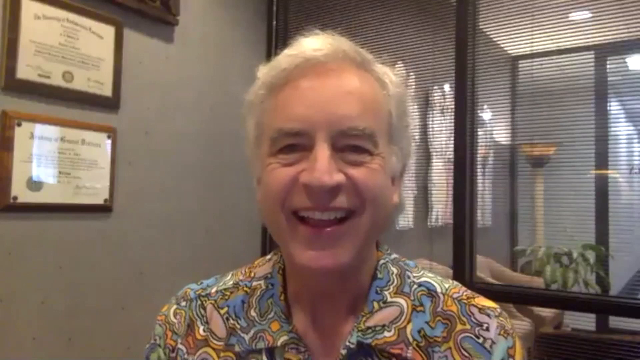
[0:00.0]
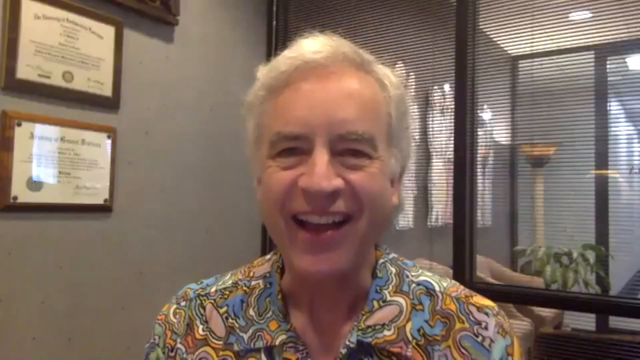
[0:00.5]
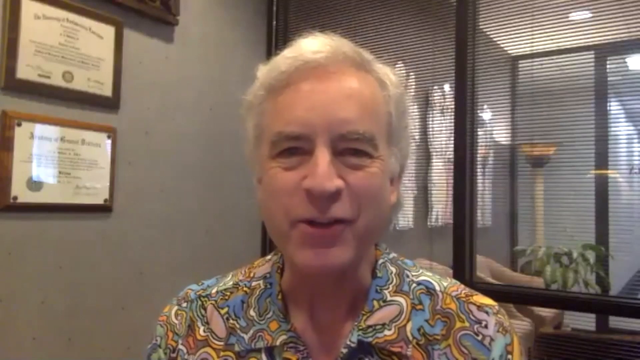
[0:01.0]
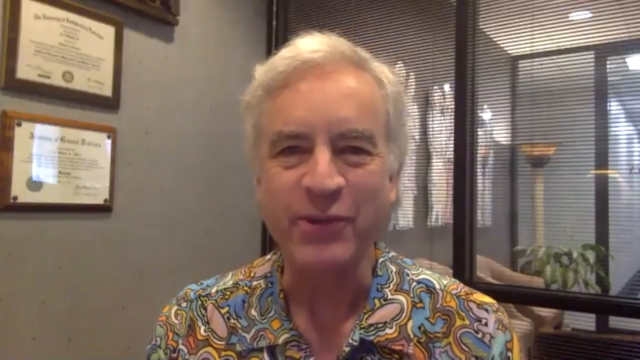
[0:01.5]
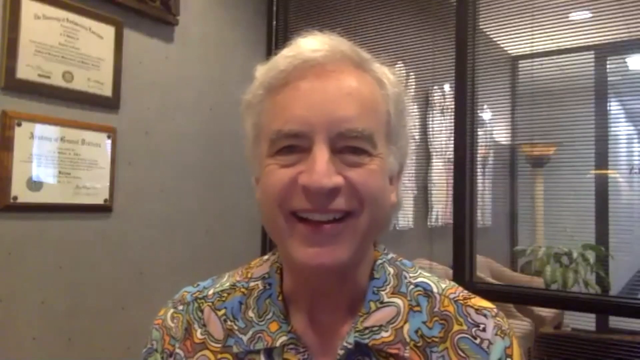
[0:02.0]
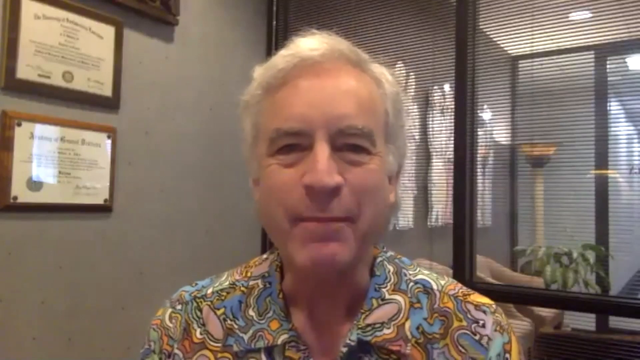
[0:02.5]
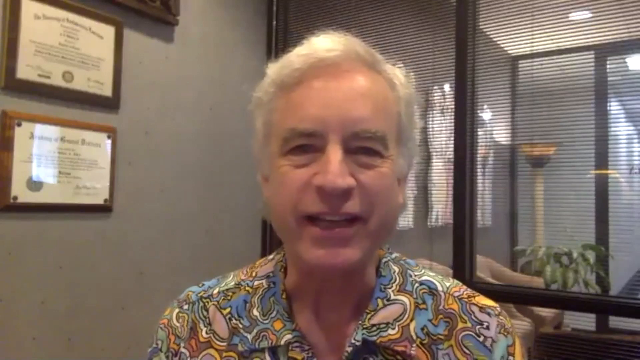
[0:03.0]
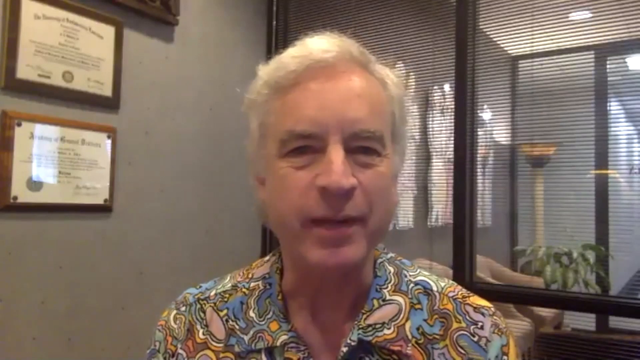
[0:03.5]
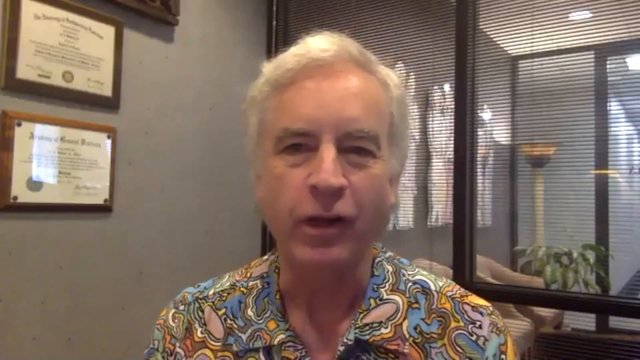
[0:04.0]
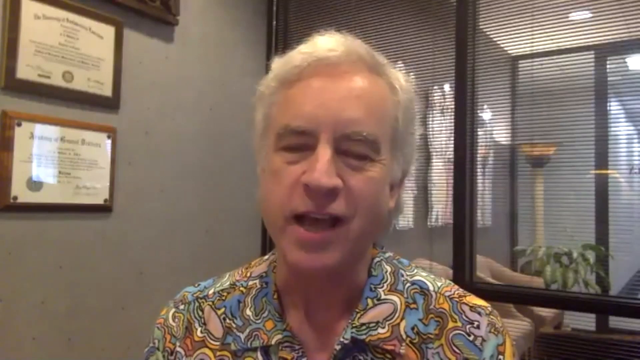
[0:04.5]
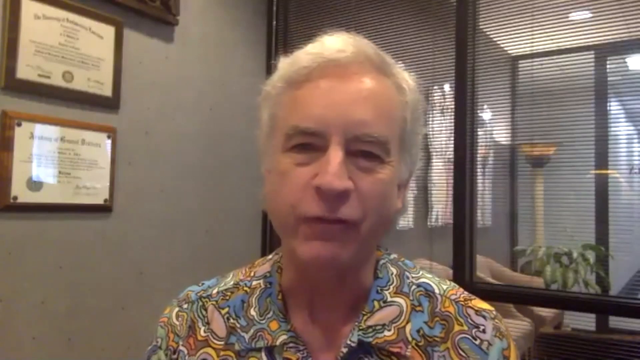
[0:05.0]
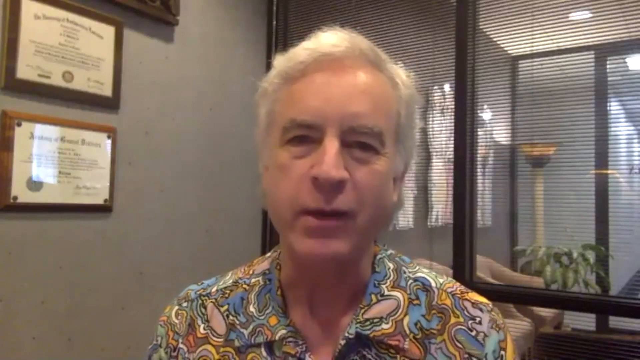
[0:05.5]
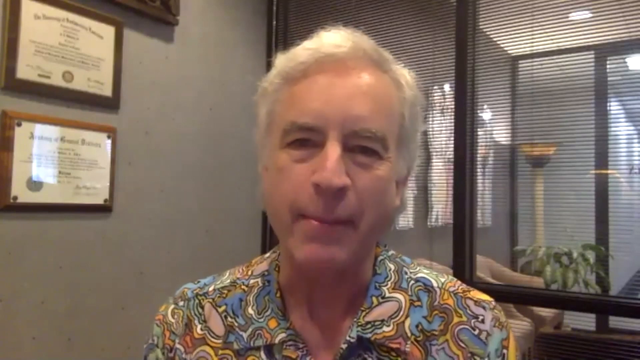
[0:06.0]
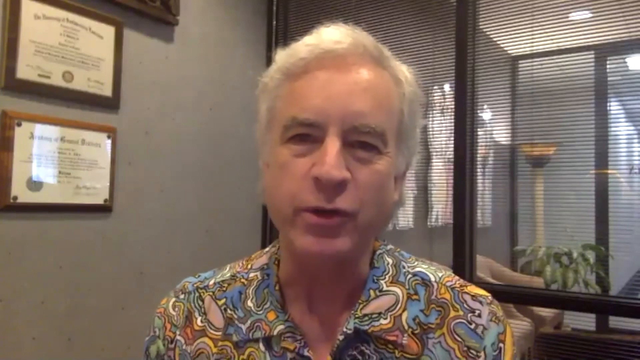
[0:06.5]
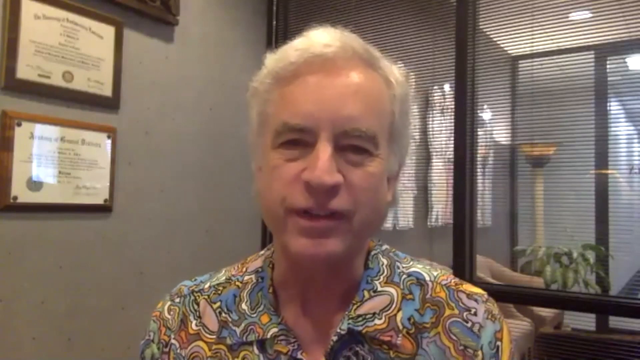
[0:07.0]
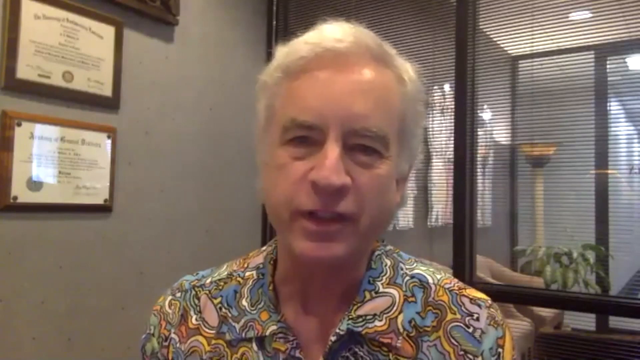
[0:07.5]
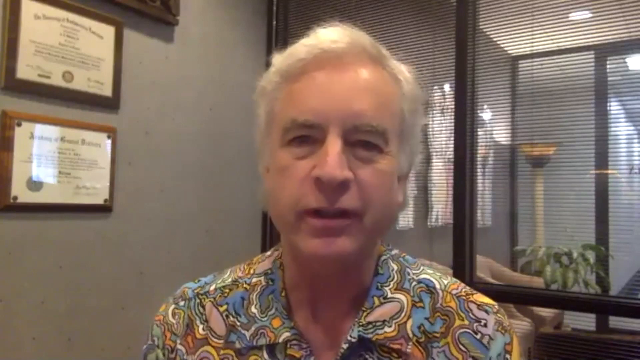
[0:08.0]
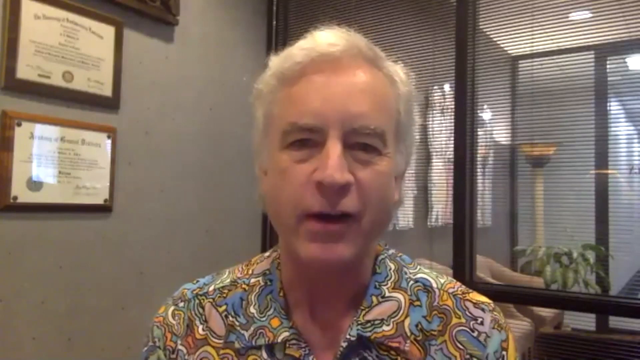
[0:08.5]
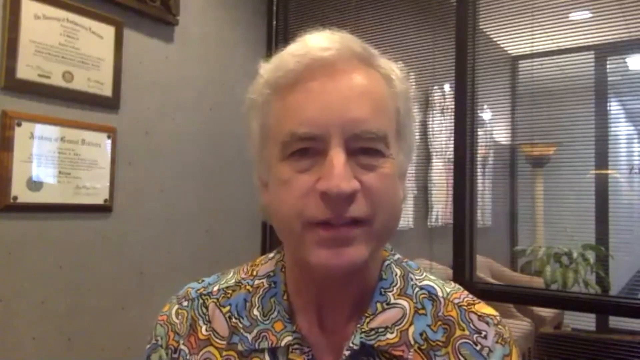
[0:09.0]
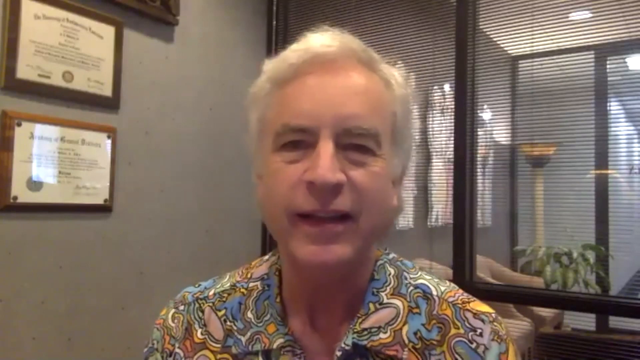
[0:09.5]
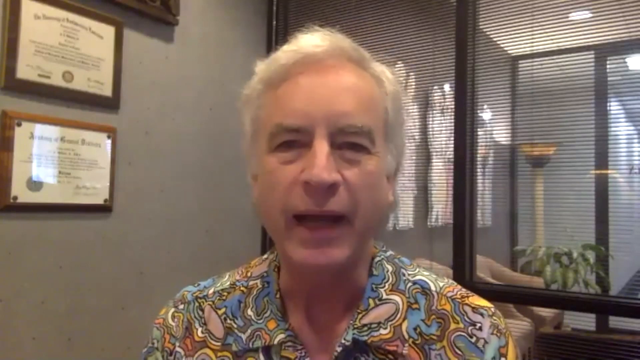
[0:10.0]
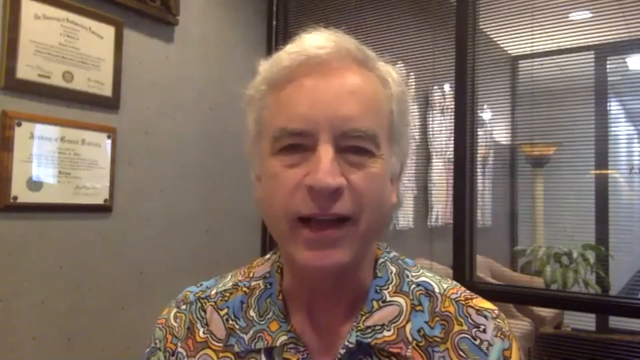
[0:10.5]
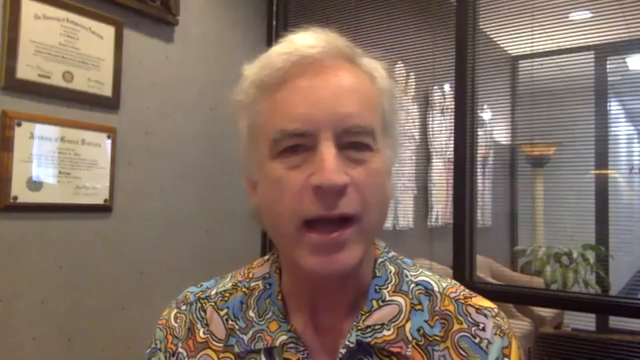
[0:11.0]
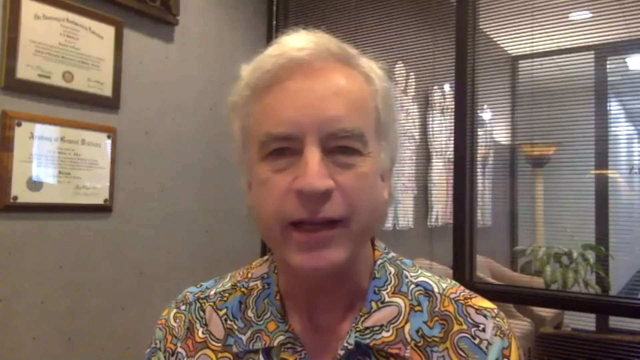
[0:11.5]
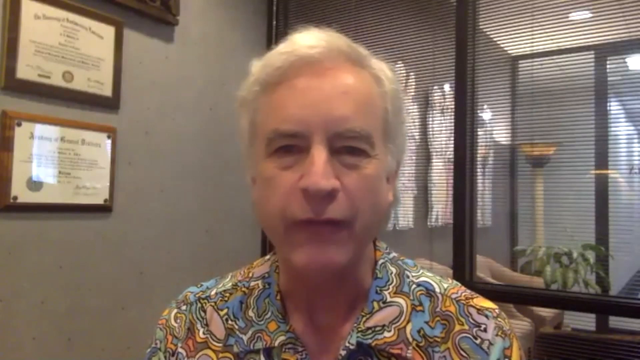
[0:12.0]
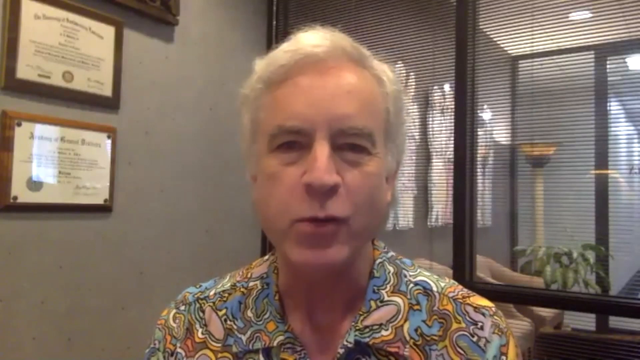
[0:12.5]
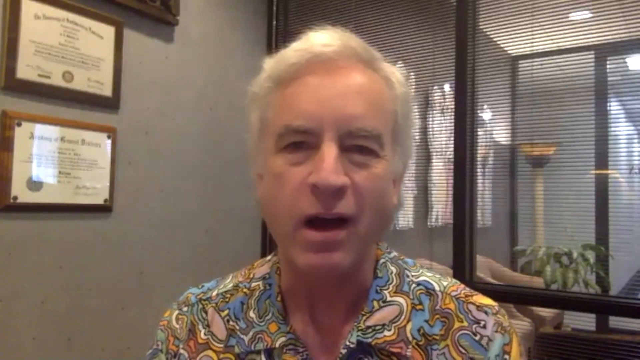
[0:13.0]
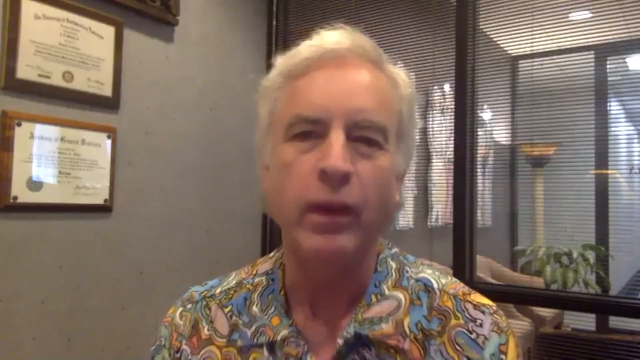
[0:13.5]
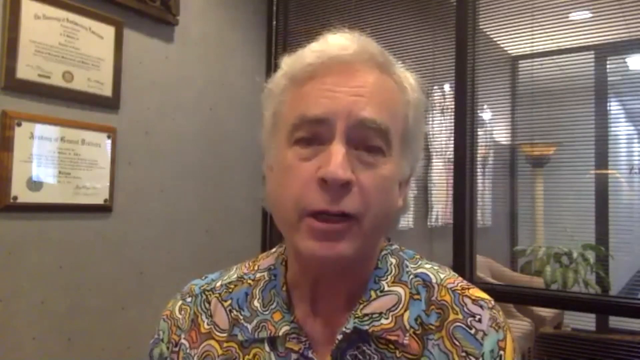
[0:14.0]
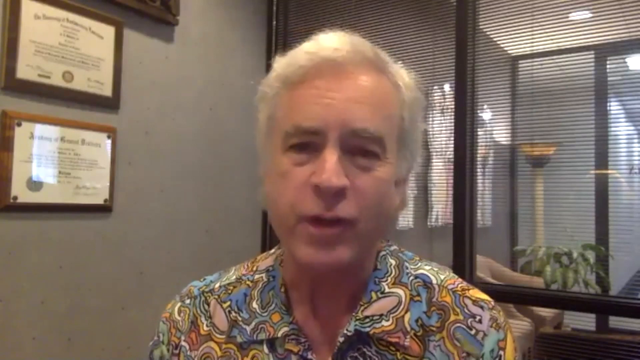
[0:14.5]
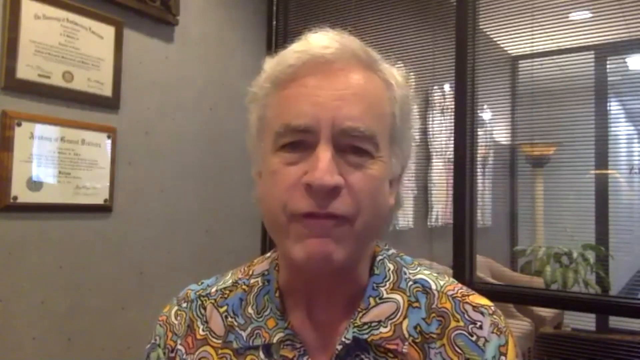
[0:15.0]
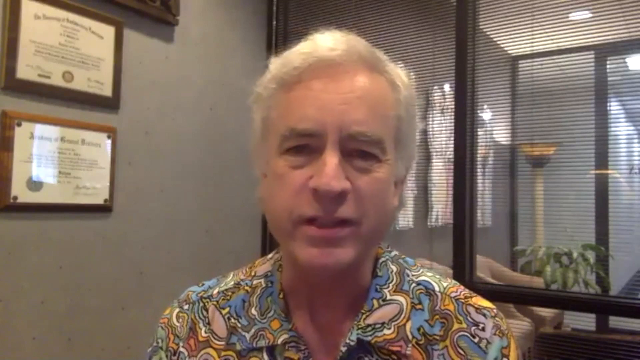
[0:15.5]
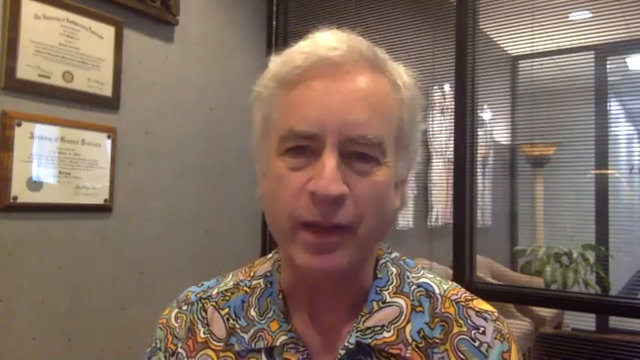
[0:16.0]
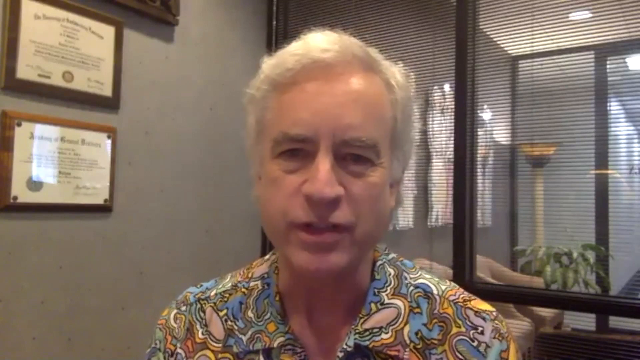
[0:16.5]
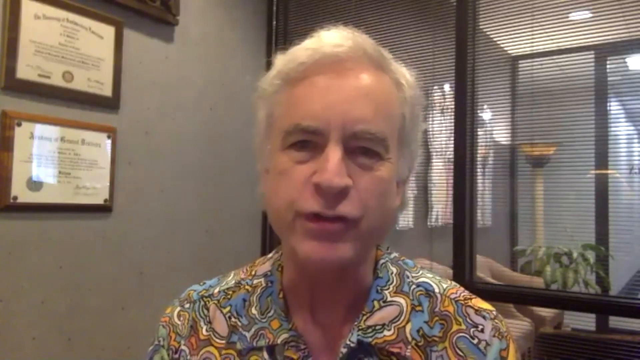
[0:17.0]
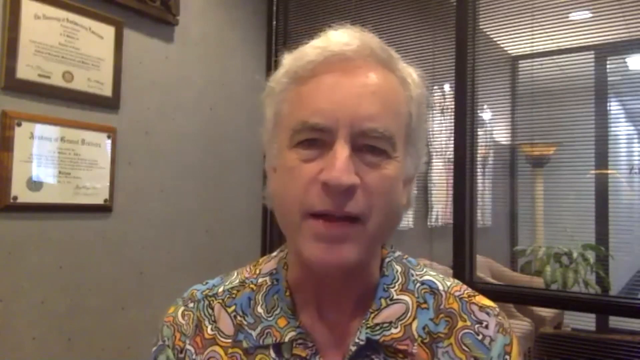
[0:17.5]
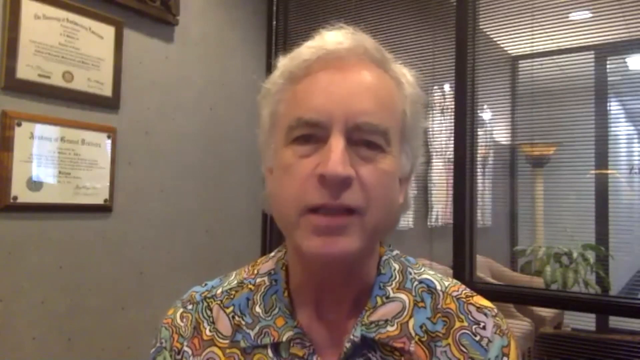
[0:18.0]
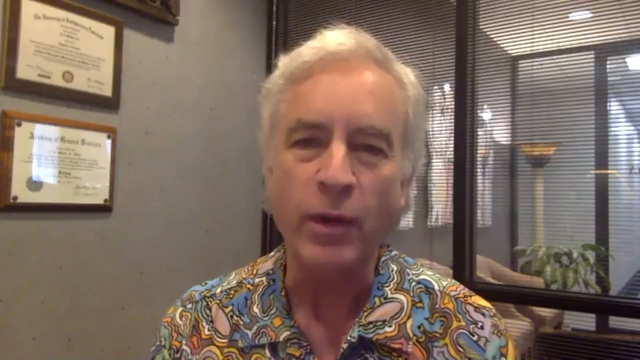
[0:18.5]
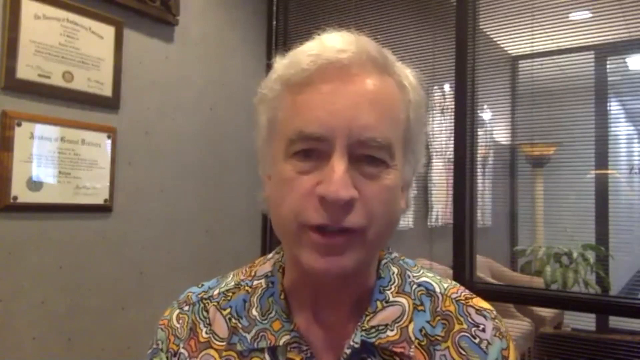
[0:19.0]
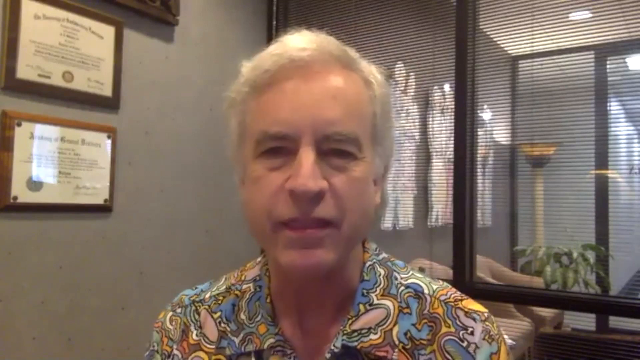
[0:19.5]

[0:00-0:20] An older man with grey hair smiles, wearing quite a funky shirt in blue, white and yellow. He looks to be in his 70s and has a full set of teeth. Behind him are black blinds, and to his left are framed certificates in brown frames. A potted plant is in the background on his right, there looks like some kind of light fitting on a stand in the background, and at least one spotlight is visible on the ceiling. He talks at a relatively quick speed with a very smiley expression, looking very passionate about what he is saying, and his expression stays happy through to the end.